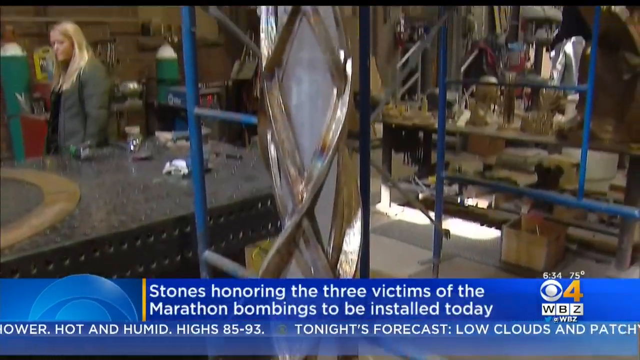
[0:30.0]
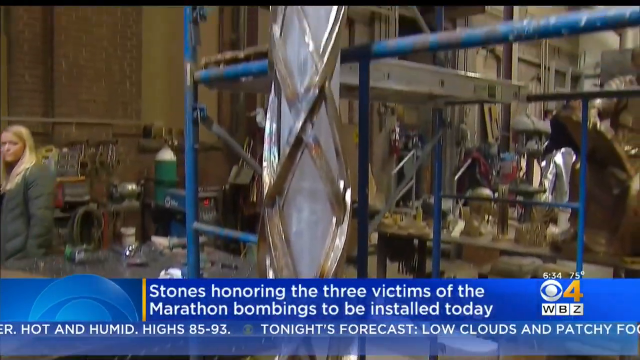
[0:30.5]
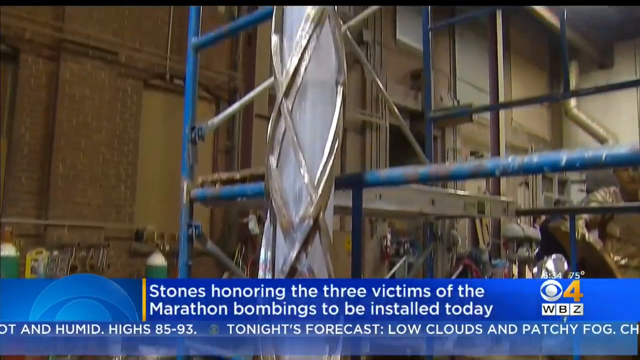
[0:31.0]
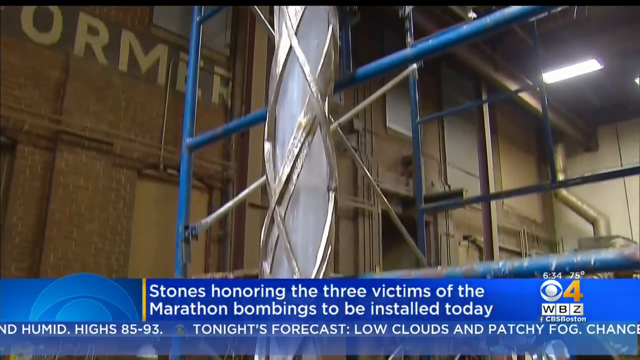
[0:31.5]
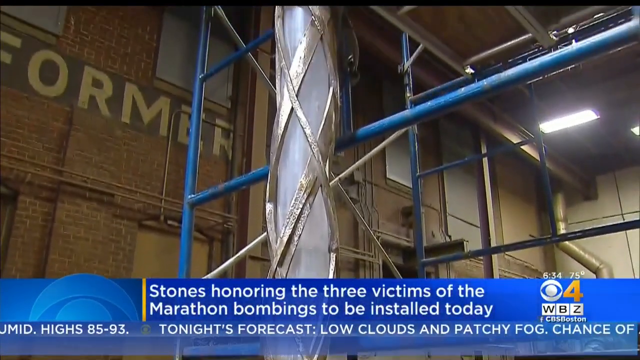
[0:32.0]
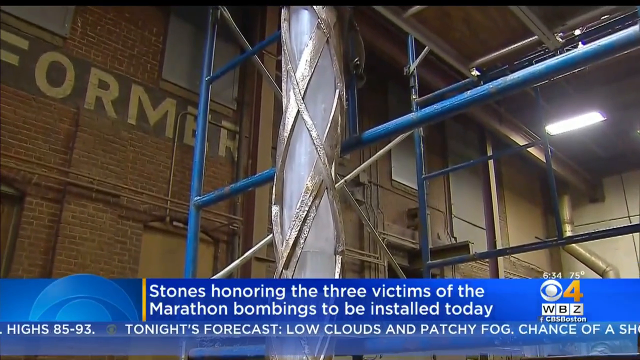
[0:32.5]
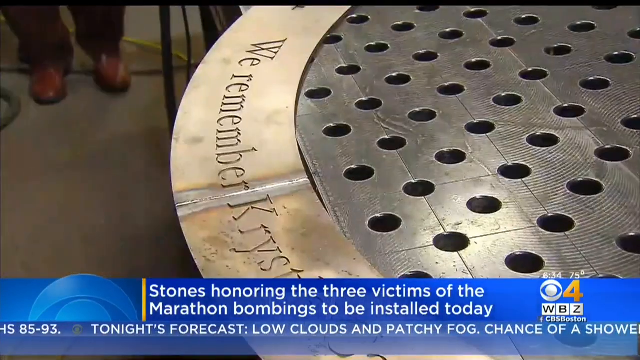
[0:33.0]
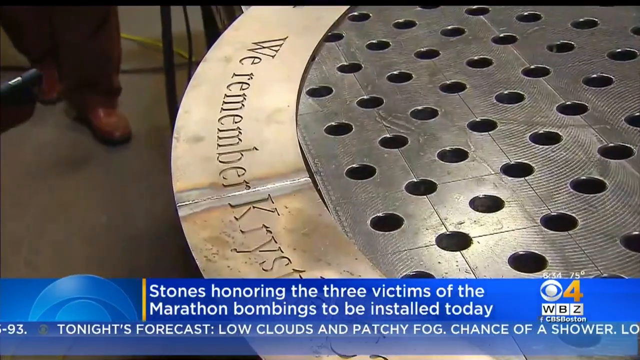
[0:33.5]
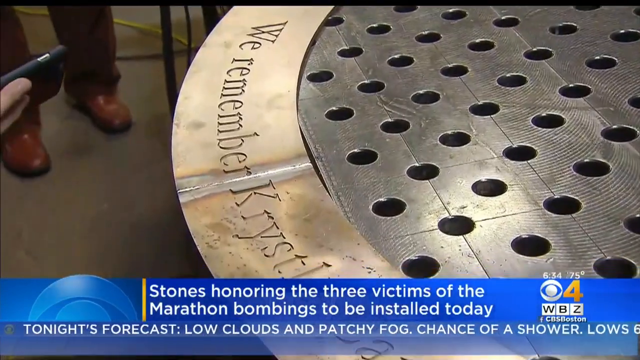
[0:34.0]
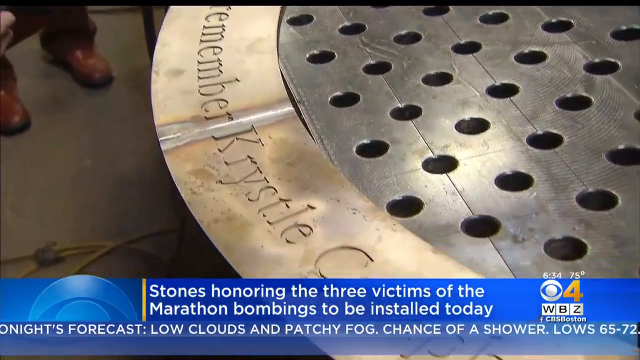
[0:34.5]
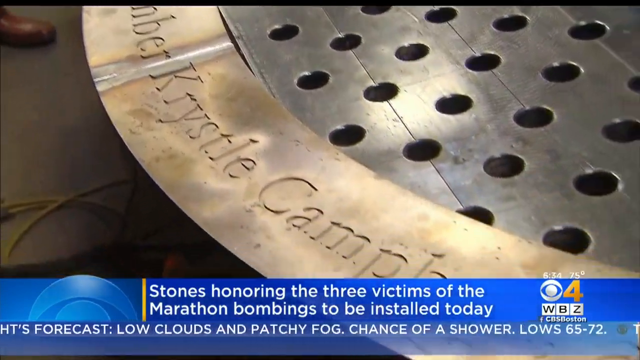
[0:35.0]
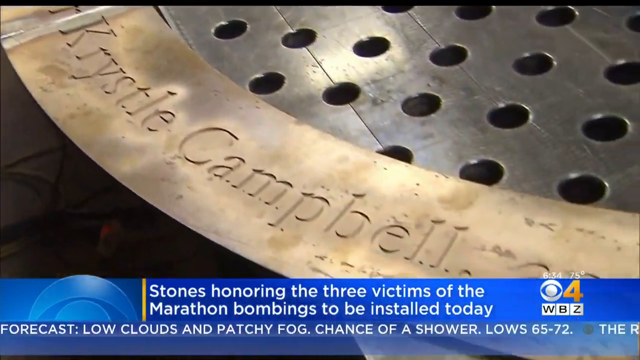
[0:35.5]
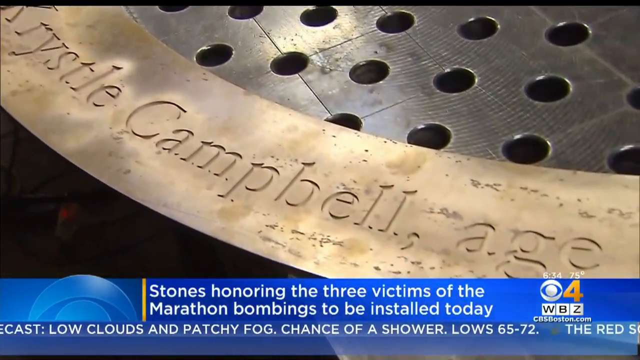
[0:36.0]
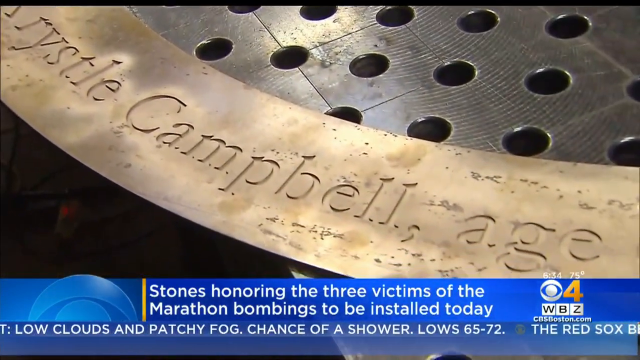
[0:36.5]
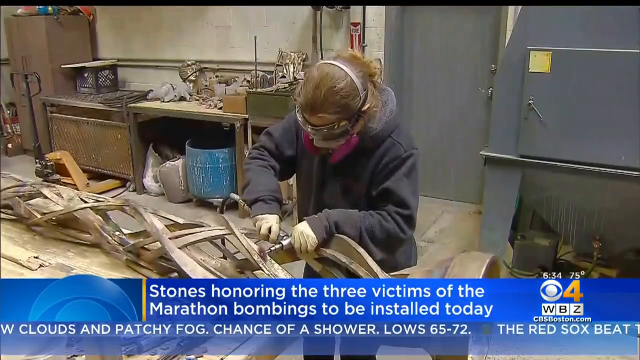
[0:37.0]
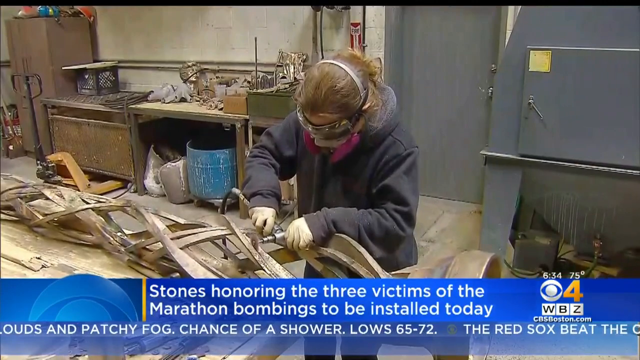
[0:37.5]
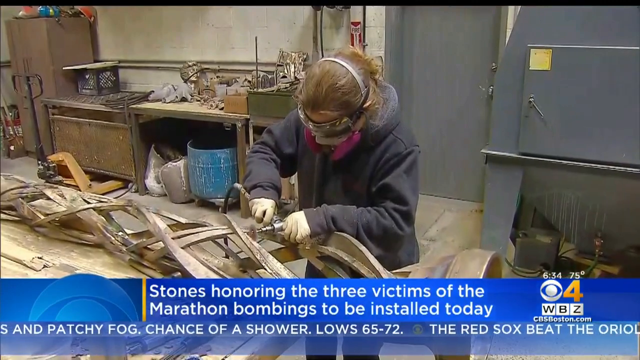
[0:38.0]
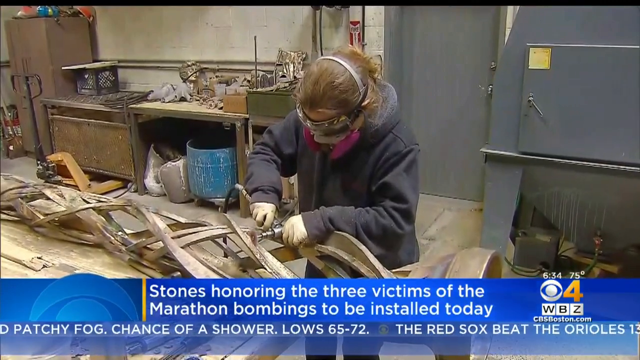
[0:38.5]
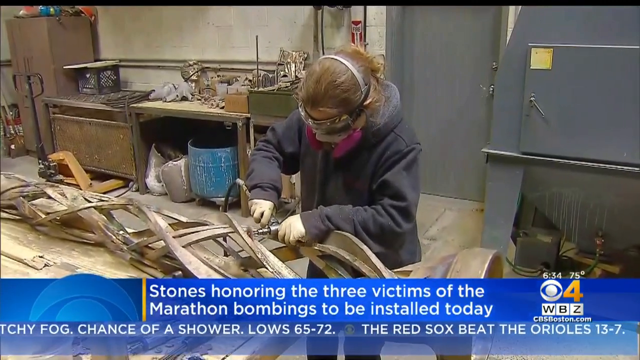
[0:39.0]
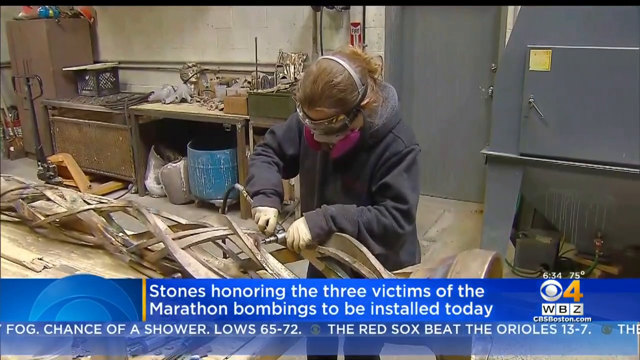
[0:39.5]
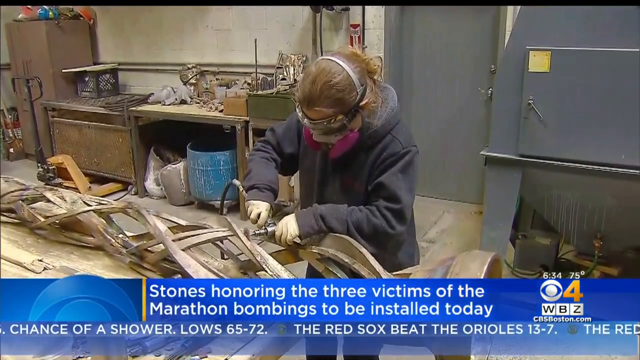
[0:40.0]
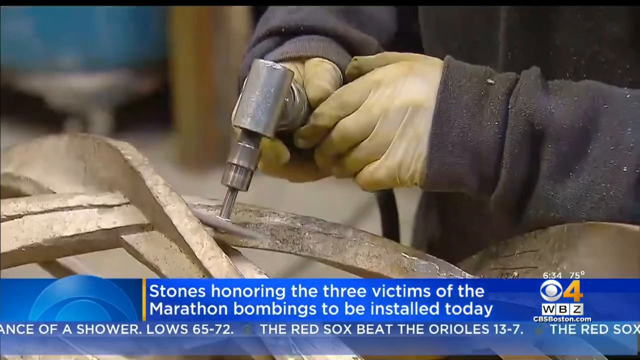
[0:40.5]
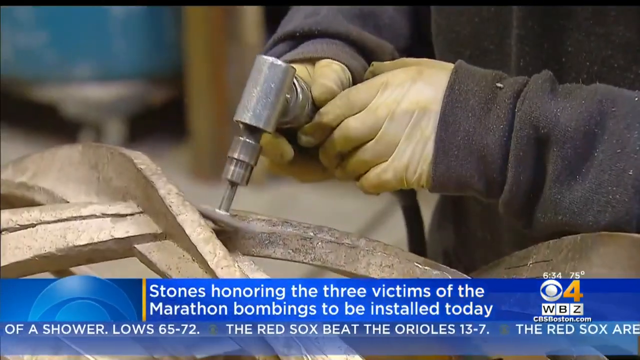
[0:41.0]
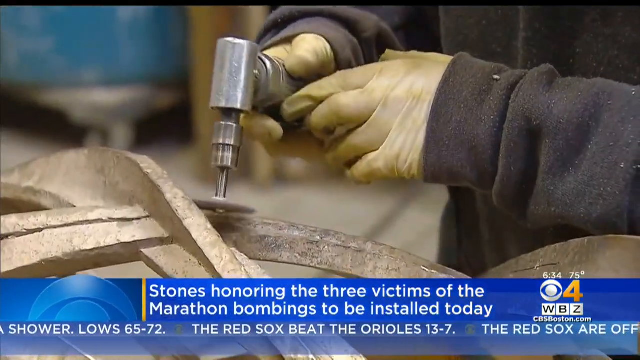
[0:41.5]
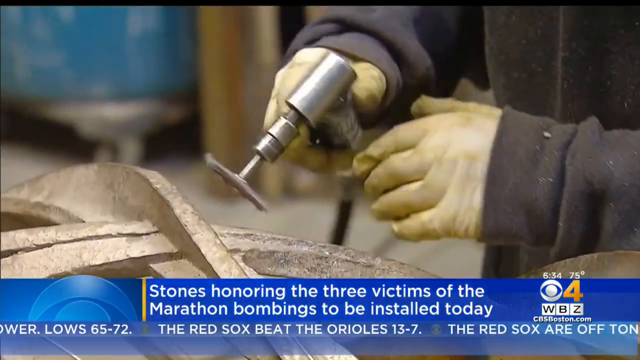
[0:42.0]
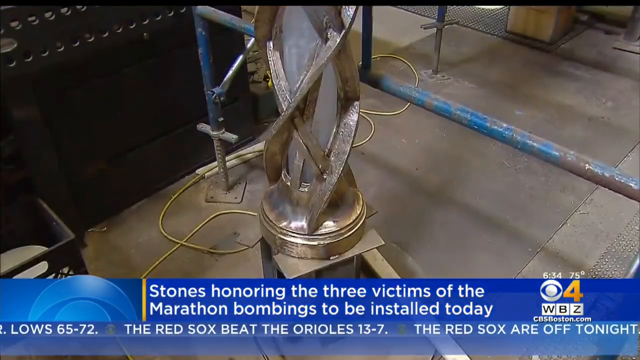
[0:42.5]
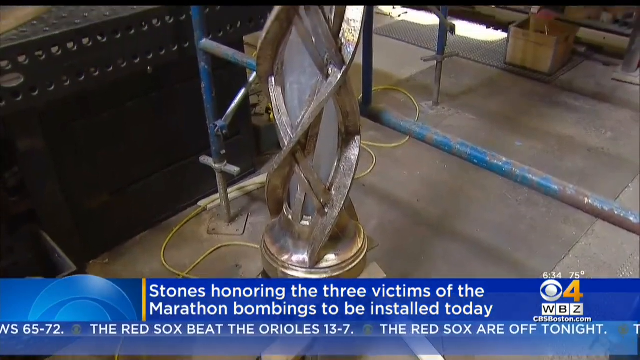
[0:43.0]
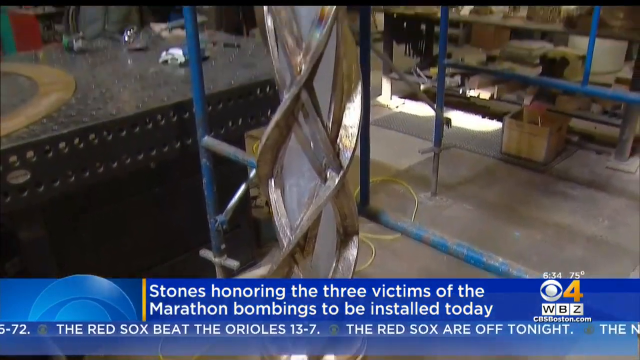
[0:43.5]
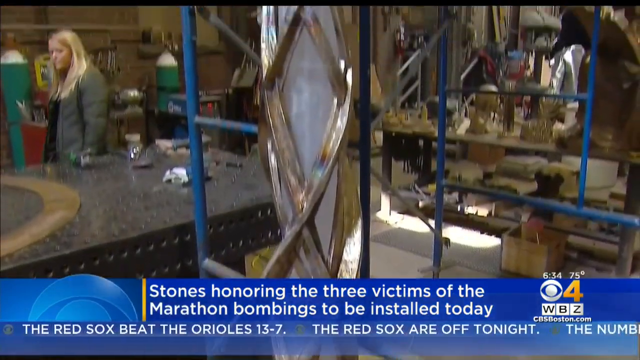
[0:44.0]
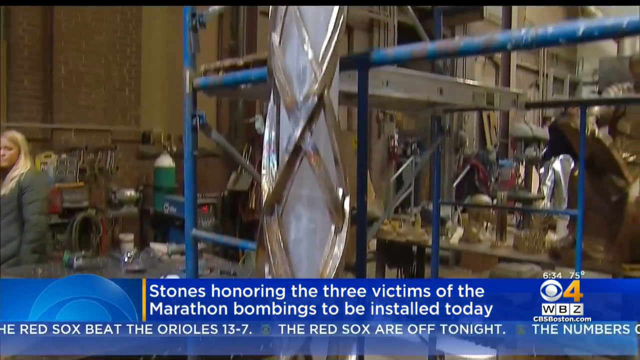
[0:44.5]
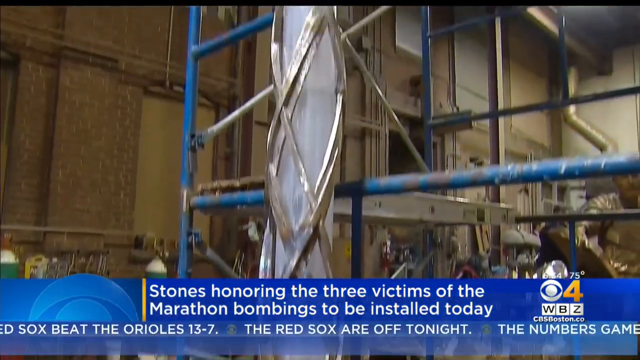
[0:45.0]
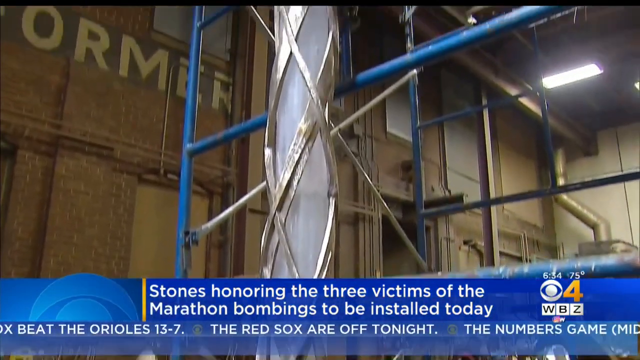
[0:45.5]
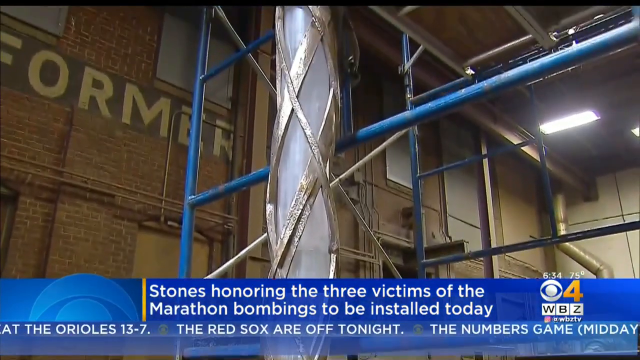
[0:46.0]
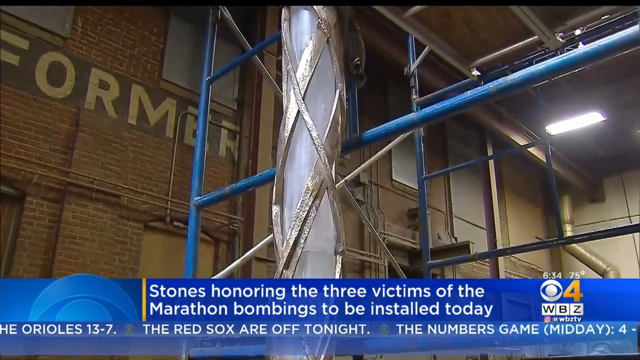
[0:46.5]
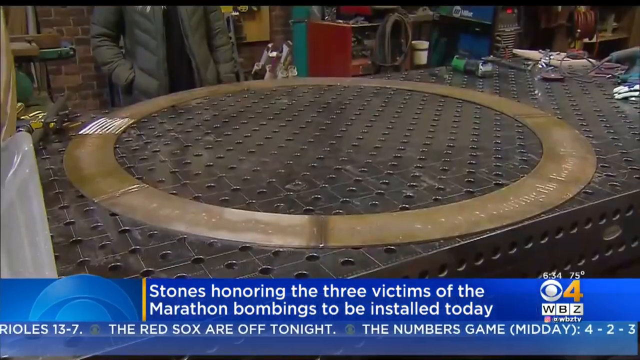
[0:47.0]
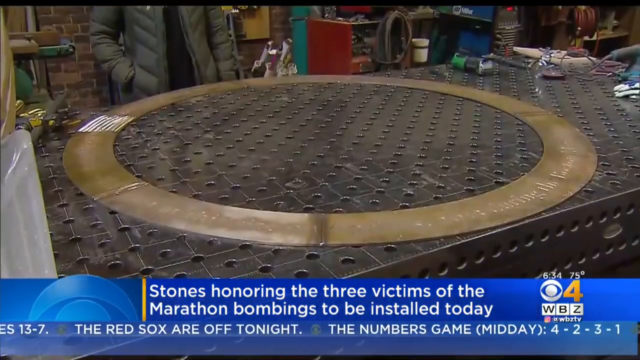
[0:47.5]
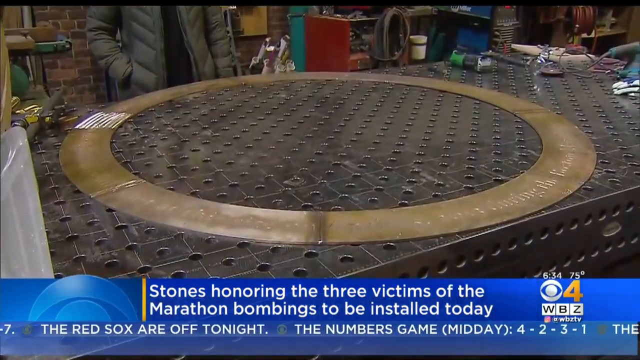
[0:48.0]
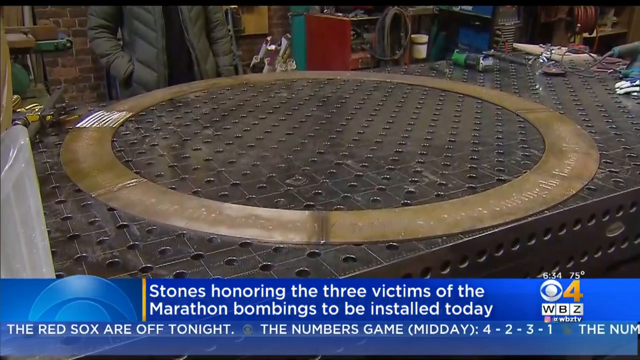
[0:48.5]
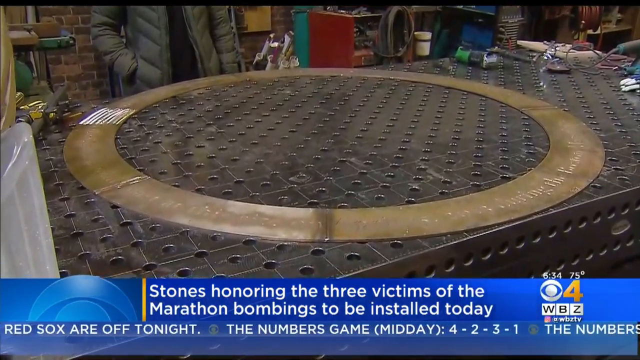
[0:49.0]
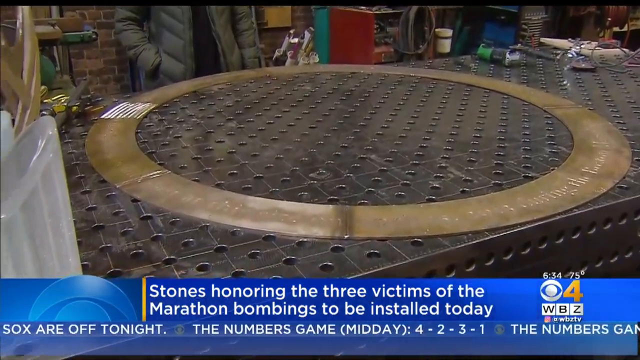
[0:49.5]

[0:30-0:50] A man, Mr. Sain, appears. The report concerns stones honoring the three victims of the Marathon bombings, to be installed today. Forecast information shows low clouds and patchy fog for tonight. Someone is working with a tool that seems to be an electric peeler or something similar.